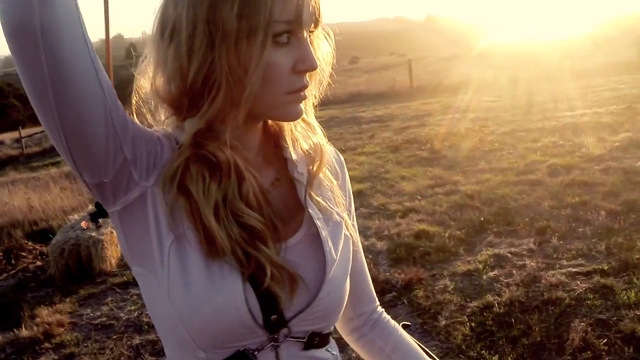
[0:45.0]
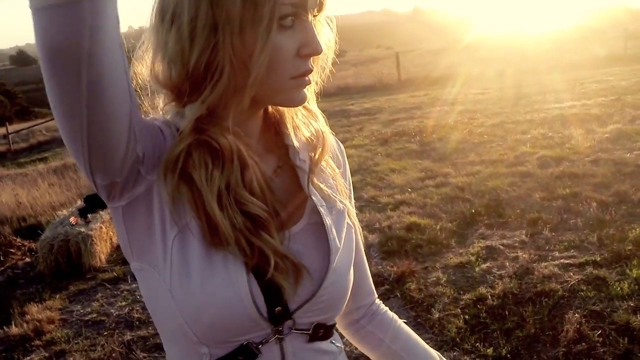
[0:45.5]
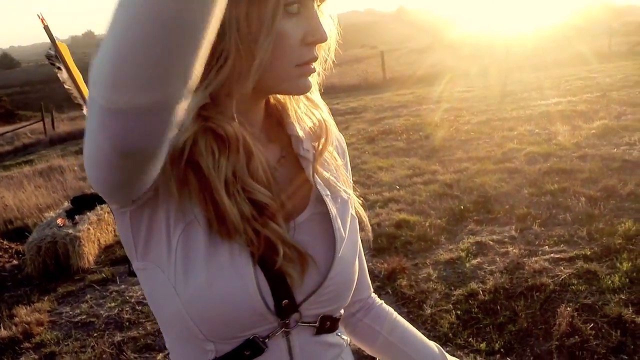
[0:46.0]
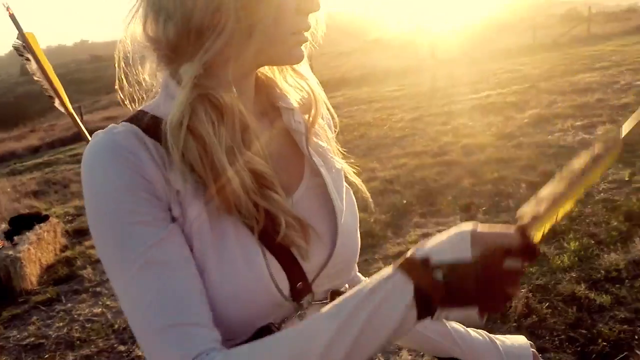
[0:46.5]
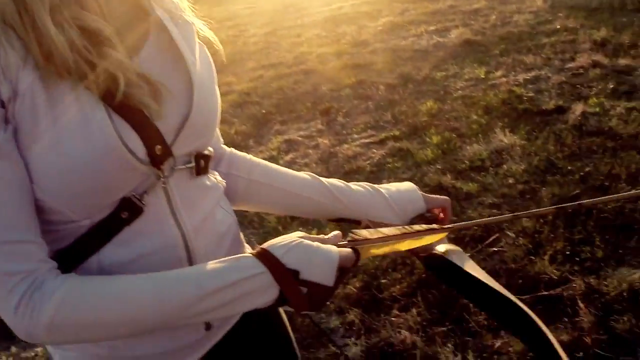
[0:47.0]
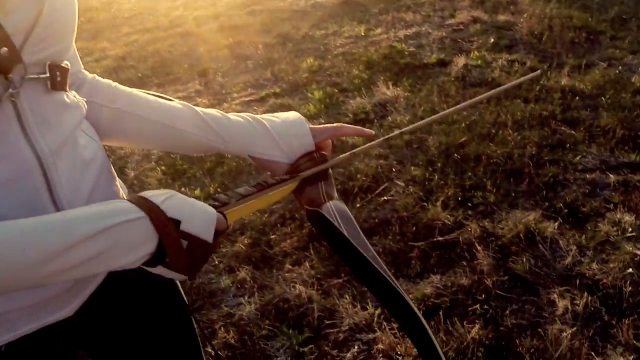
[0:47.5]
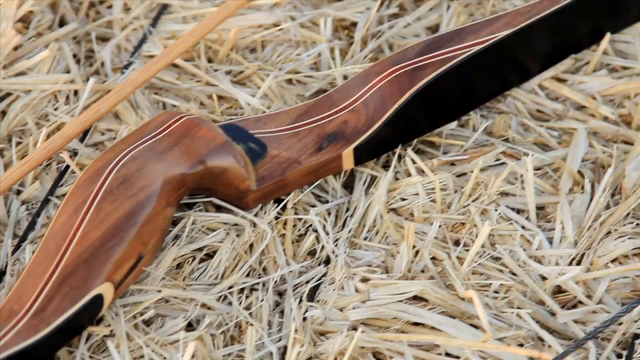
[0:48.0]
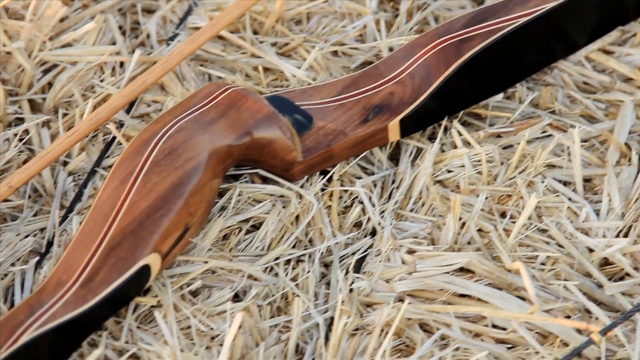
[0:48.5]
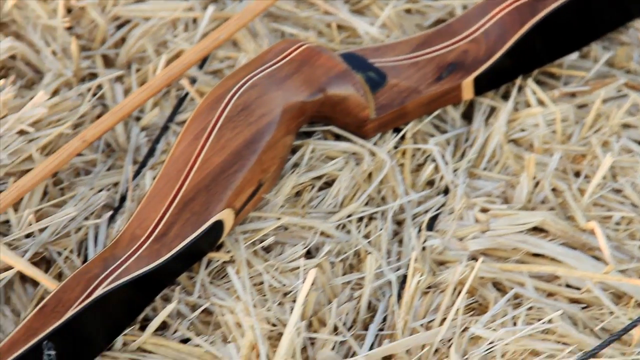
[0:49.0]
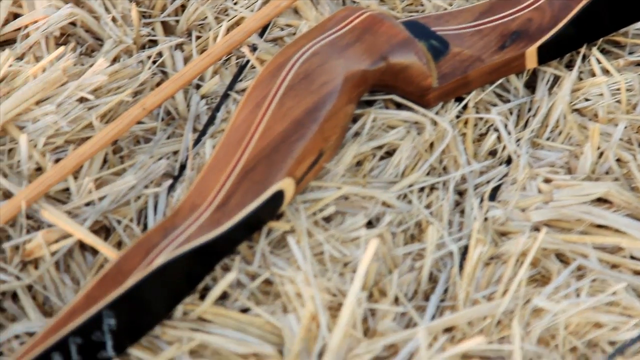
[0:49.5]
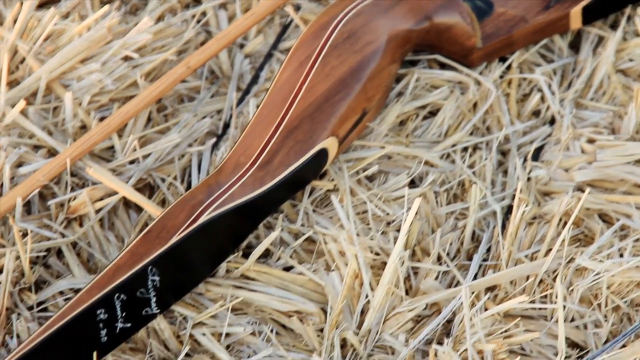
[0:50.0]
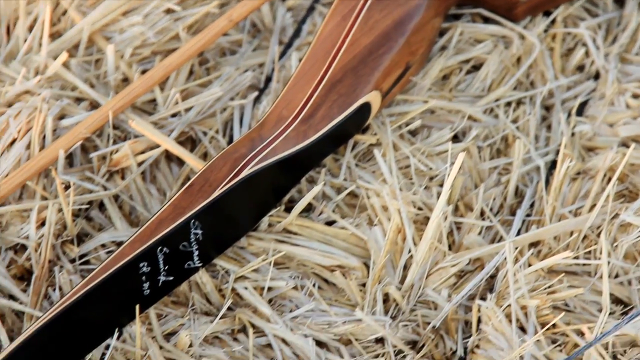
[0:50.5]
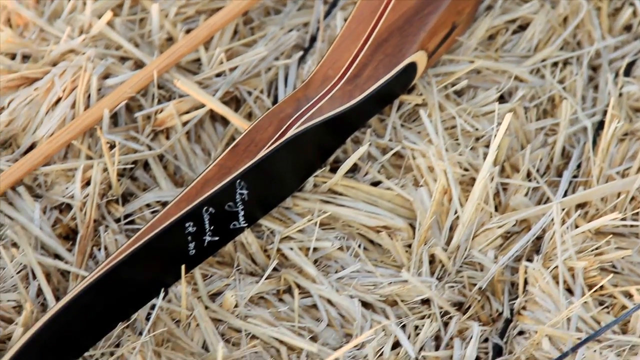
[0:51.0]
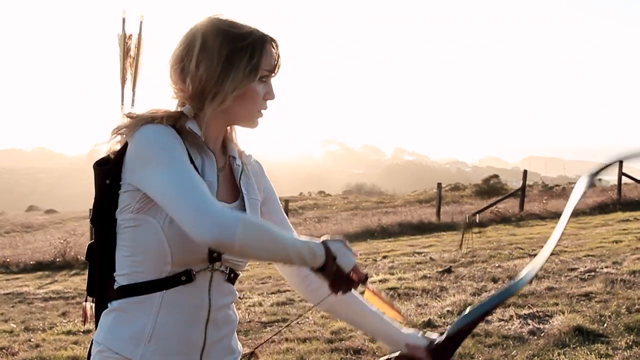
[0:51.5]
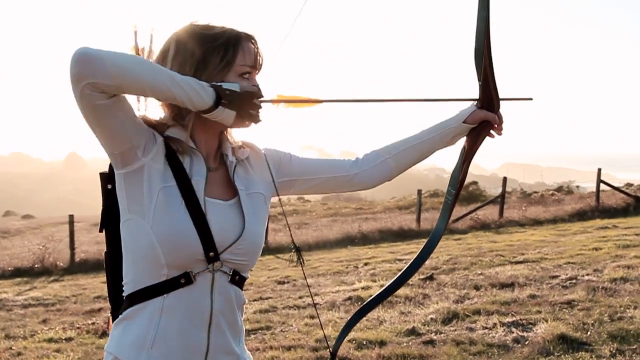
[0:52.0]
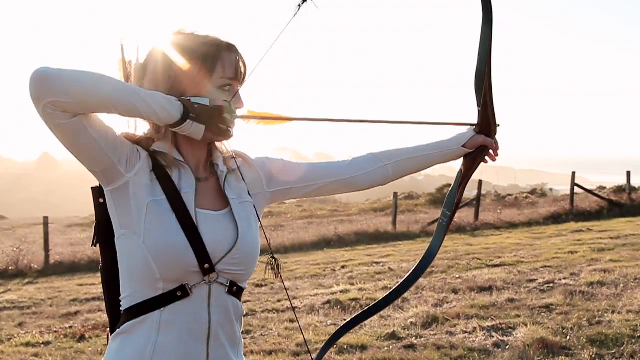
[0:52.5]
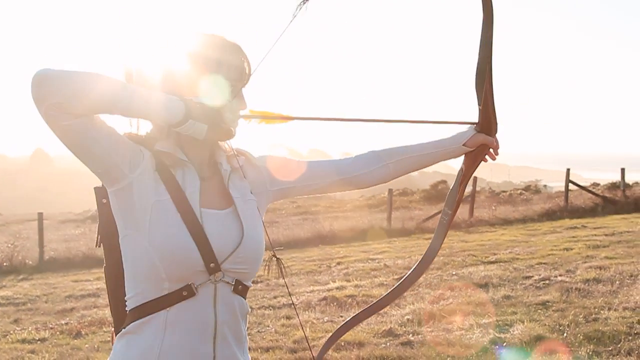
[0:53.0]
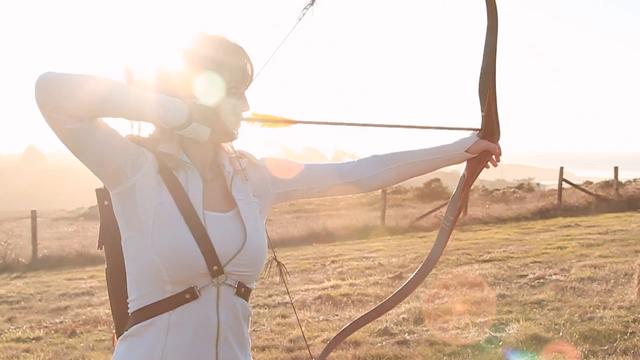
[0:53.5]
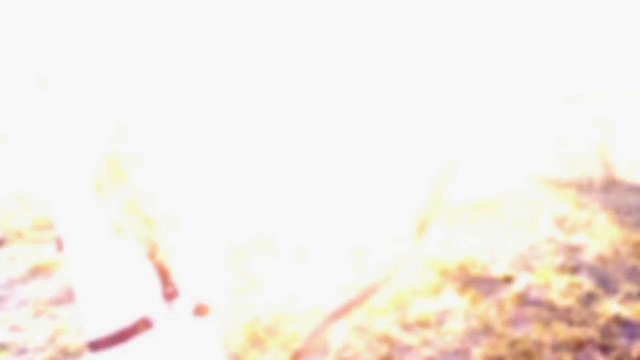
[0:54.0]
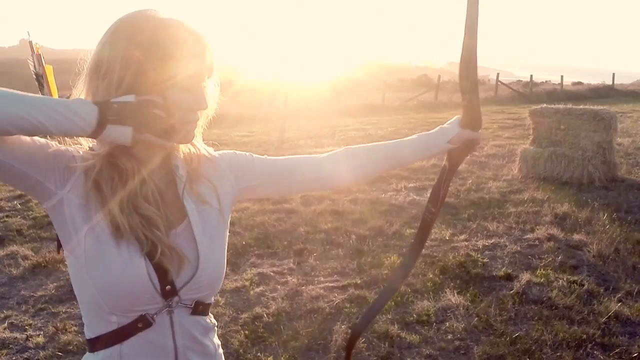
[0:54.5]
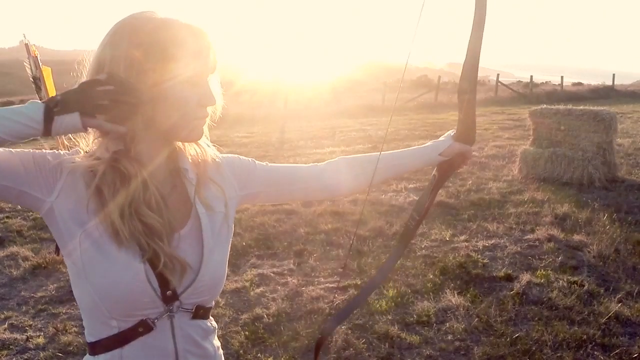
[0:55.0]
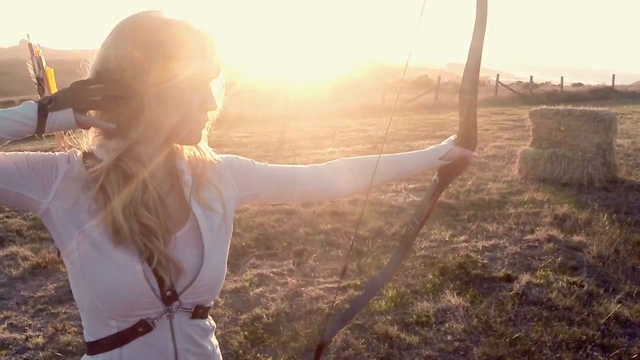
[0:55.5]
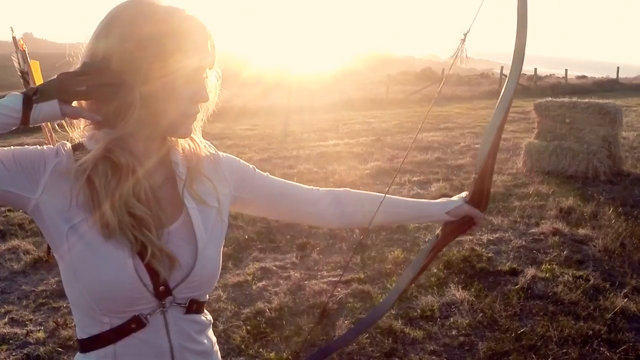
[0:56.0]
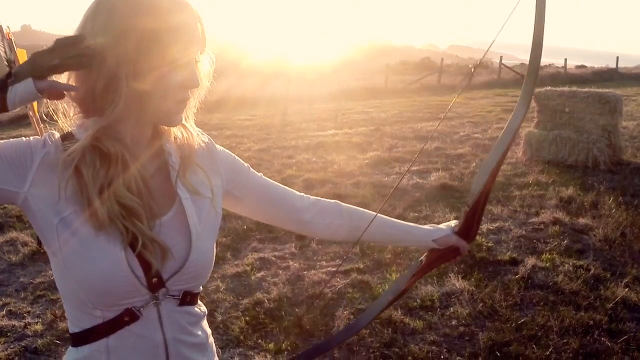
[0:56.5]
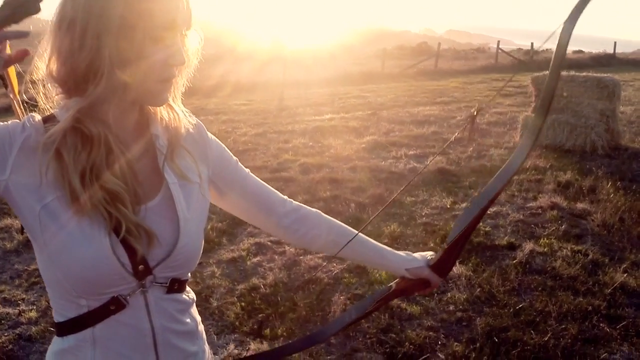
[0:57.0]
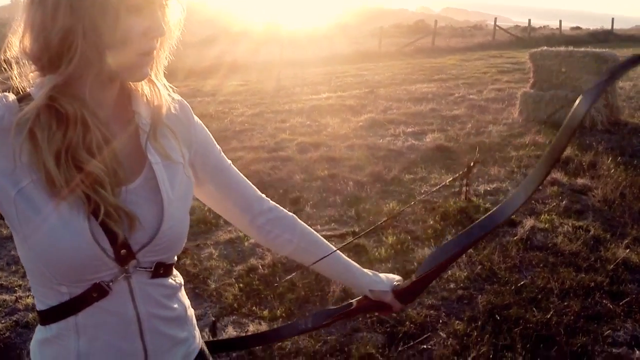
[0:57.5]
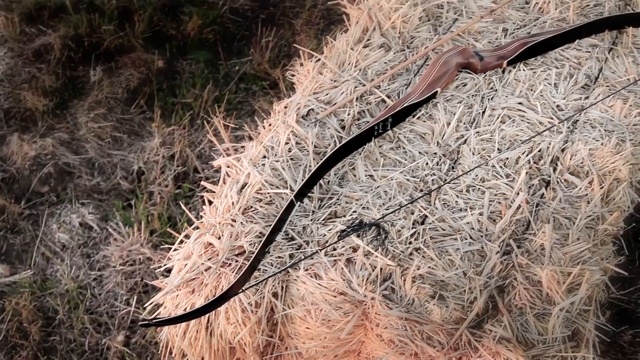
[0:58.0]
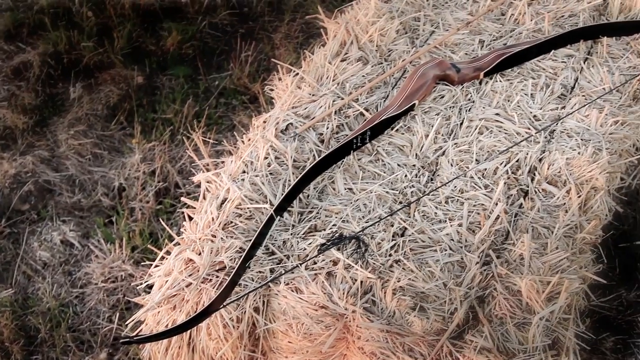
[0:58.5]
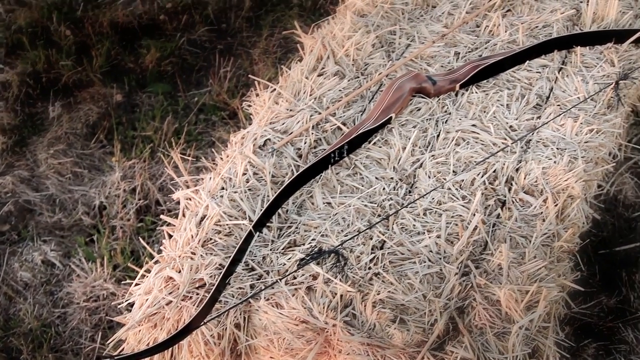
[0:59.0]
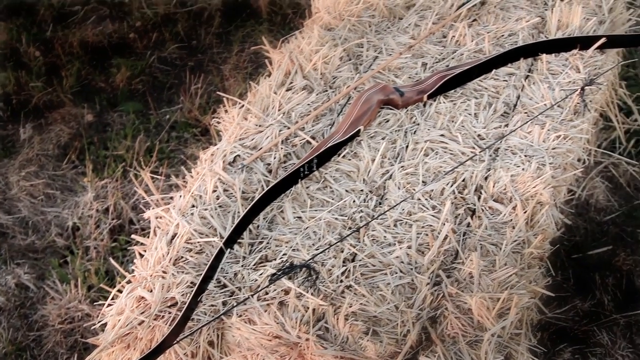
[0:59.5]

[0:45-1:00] A close-up shows the girl's face, with her blonde hair in pigtails. Her arm is raised by her head and she looks forward, with the sun somewhat in the background. She puts her hand down, holding the arrow with a wooden or leather material next to it. Hay lies on the ground with the leather or wooden material on top of it, and the camera moves across the material, showing the word "Stingray" on it. In a different close-up scene, the girl gets ready to fire again, putting the arrow into the bow. The image flashes, and another angle shows her with the sun brightly over her face, making her hard to see. She lets go of the arrow, the screen flashes again, and she slowly lowers her arm slightly with the arrow. The scene changes to a bale of hay with the bow and arrow lying on top of it.